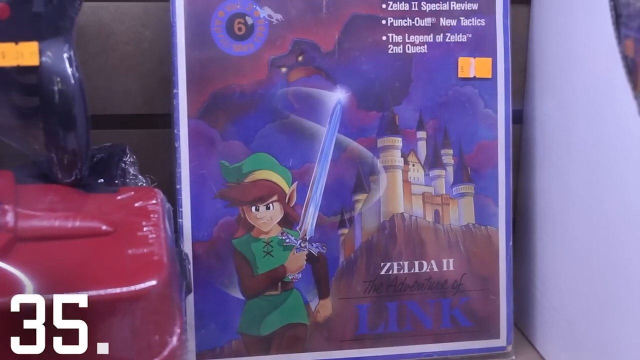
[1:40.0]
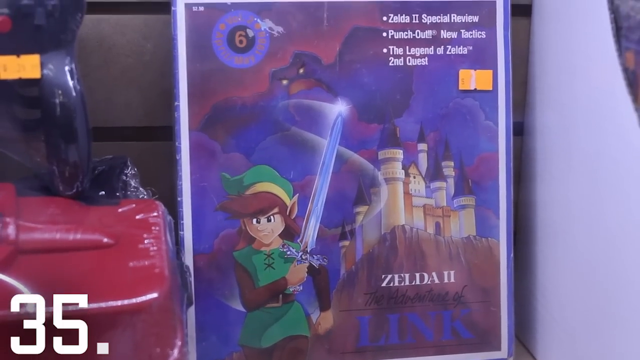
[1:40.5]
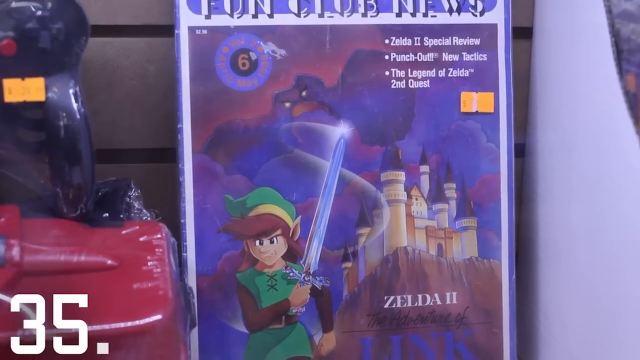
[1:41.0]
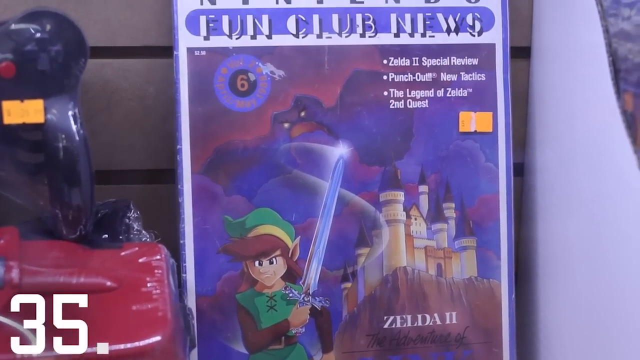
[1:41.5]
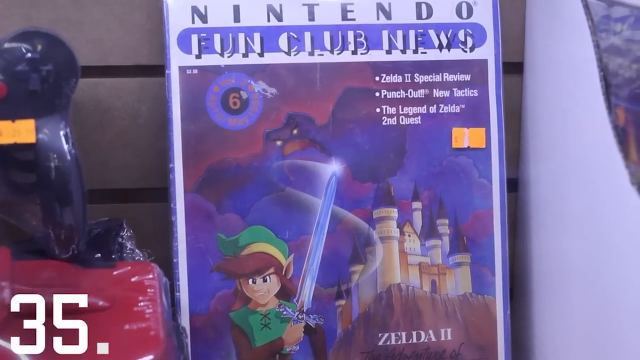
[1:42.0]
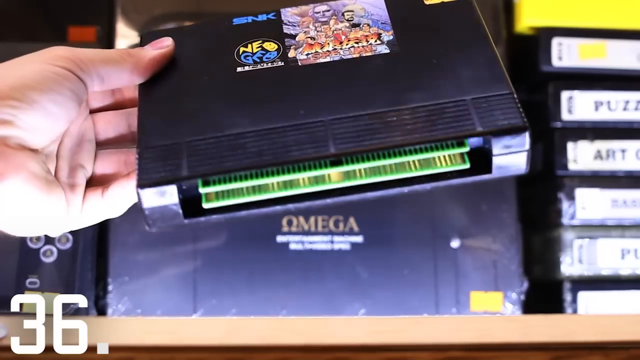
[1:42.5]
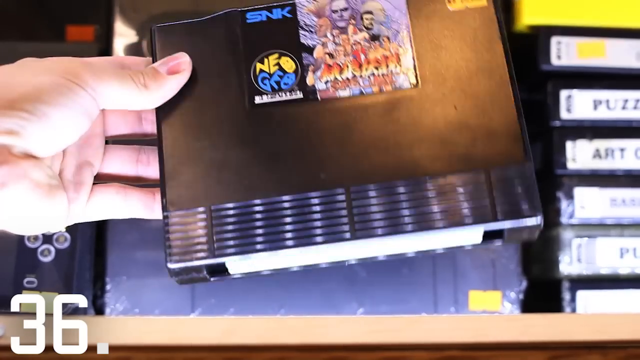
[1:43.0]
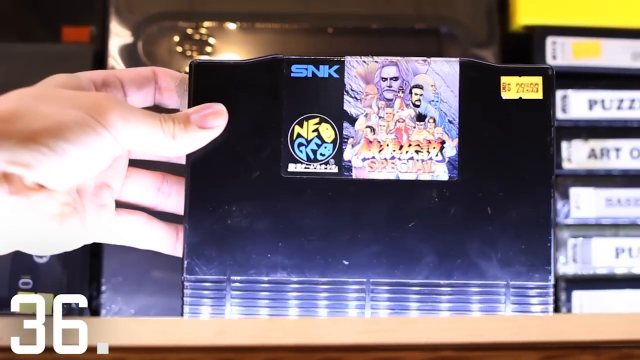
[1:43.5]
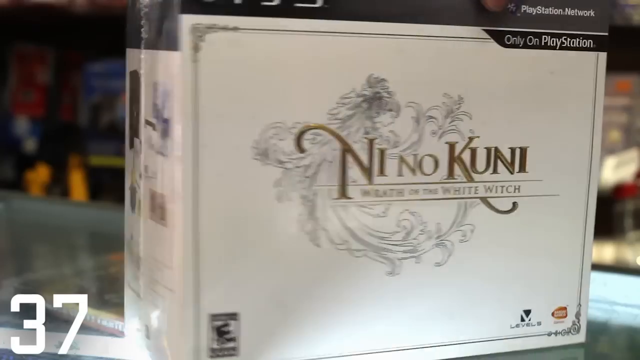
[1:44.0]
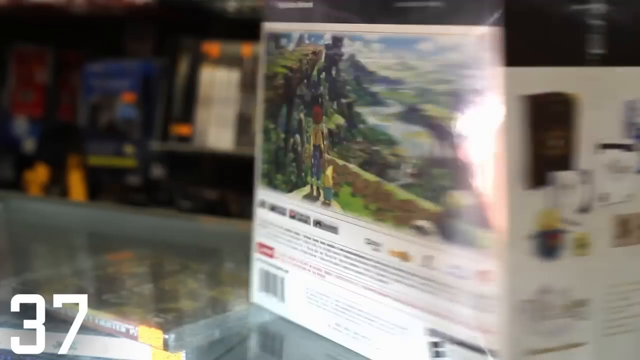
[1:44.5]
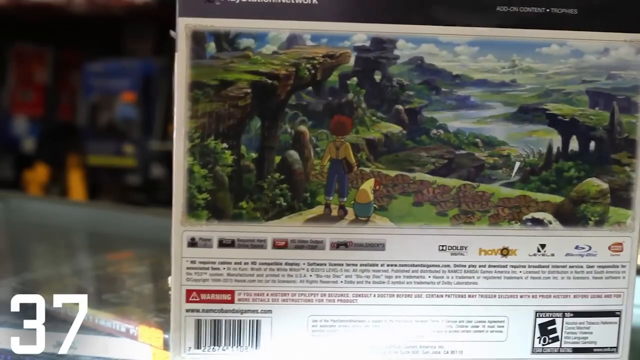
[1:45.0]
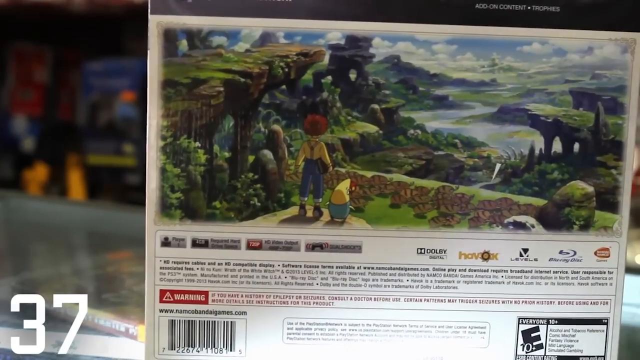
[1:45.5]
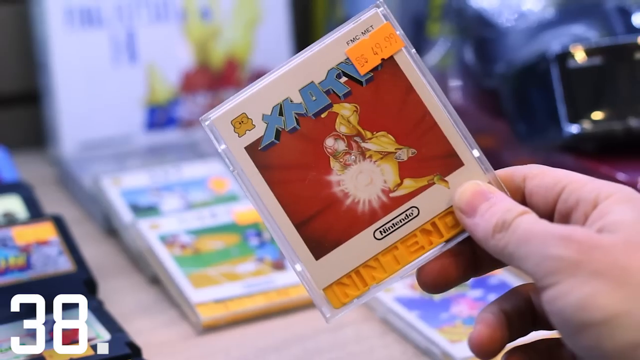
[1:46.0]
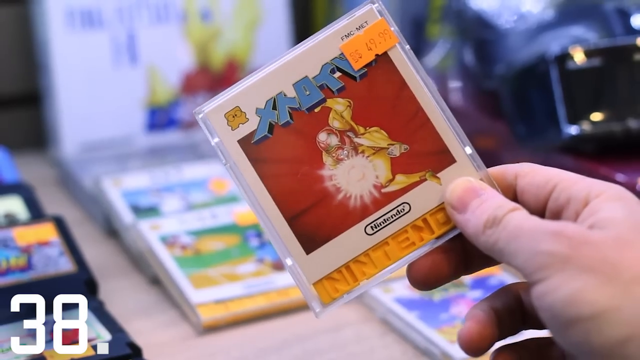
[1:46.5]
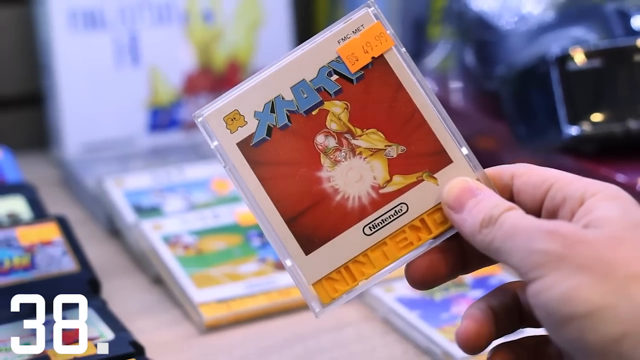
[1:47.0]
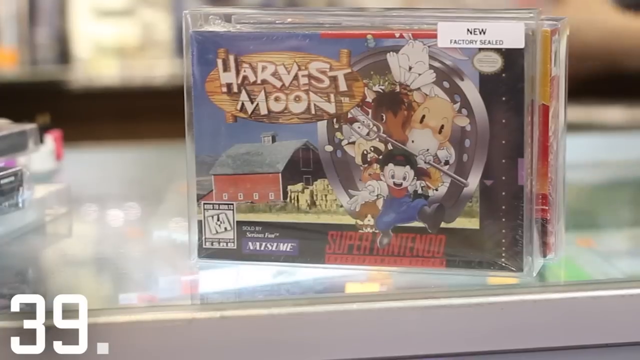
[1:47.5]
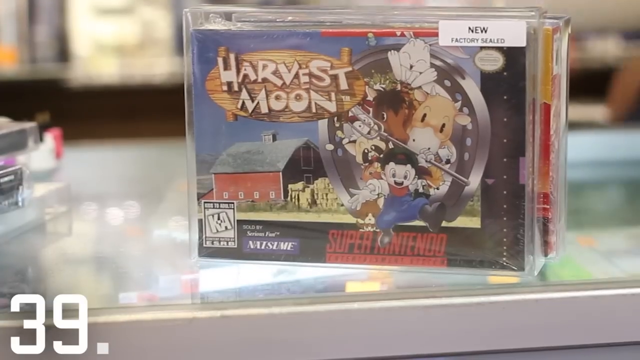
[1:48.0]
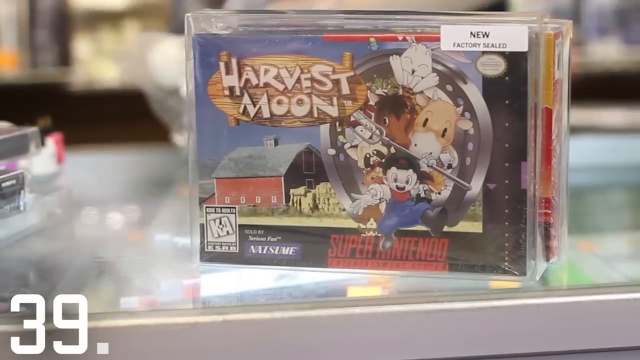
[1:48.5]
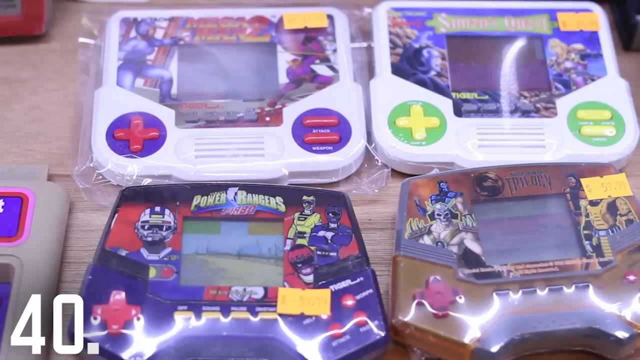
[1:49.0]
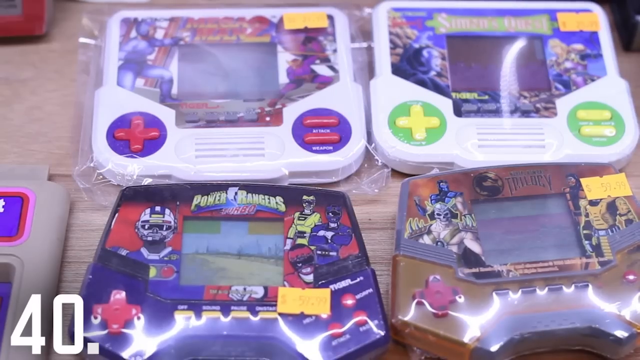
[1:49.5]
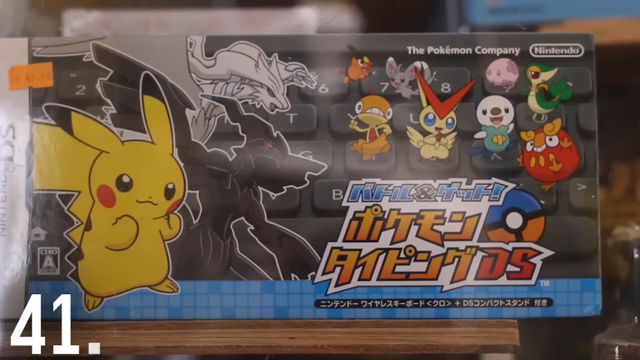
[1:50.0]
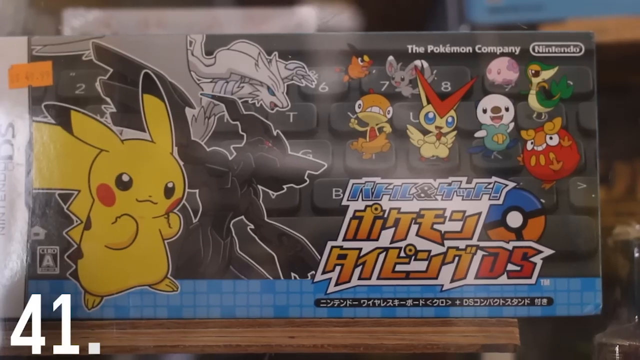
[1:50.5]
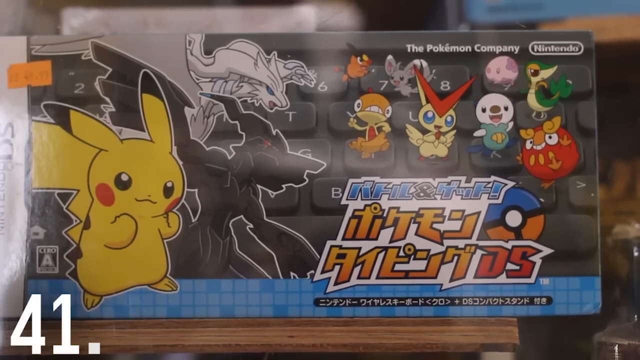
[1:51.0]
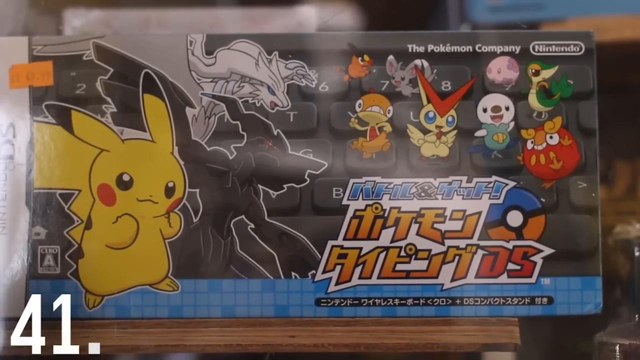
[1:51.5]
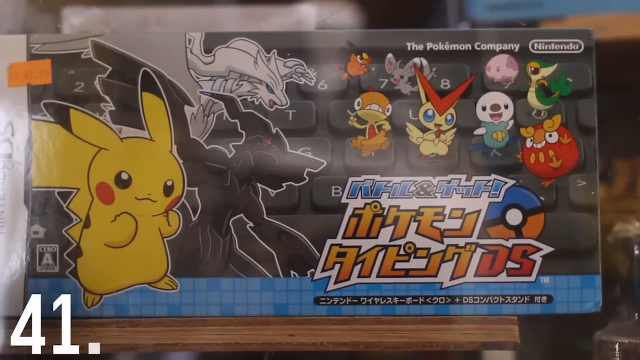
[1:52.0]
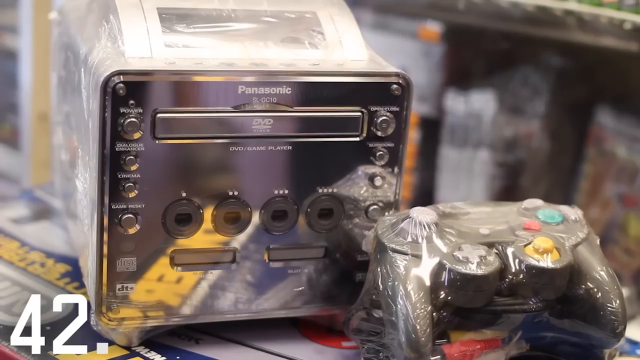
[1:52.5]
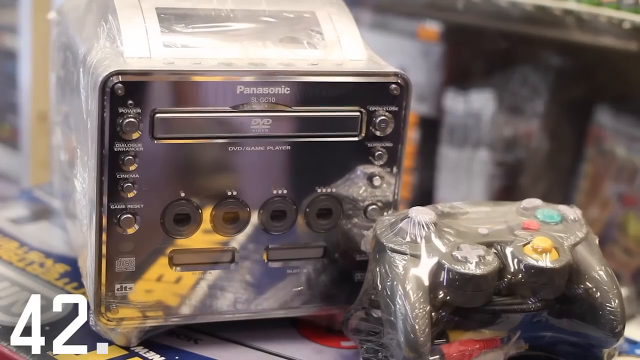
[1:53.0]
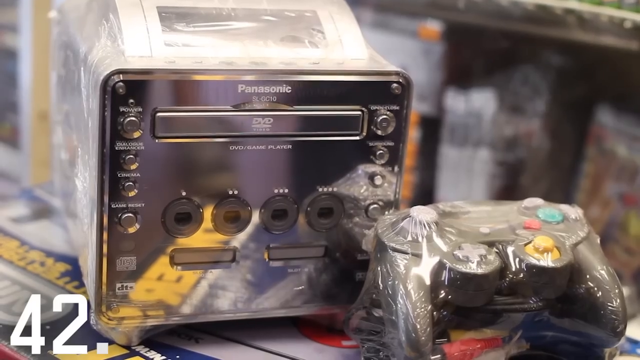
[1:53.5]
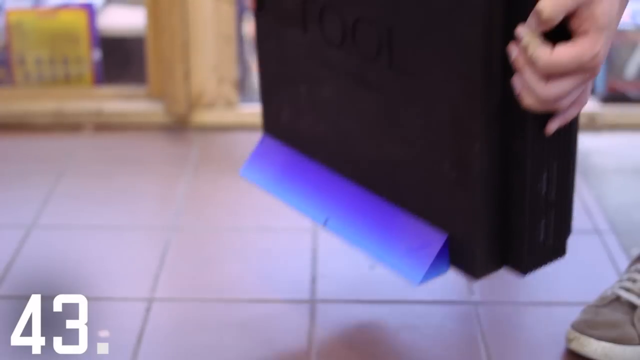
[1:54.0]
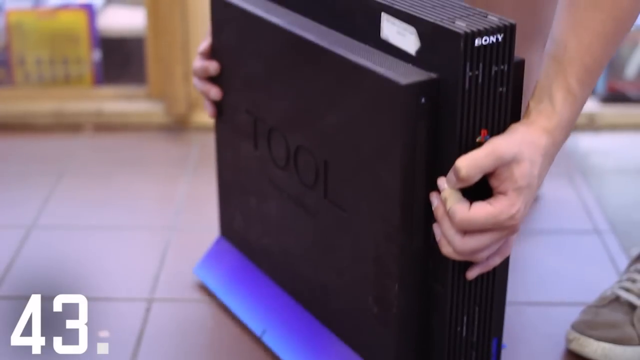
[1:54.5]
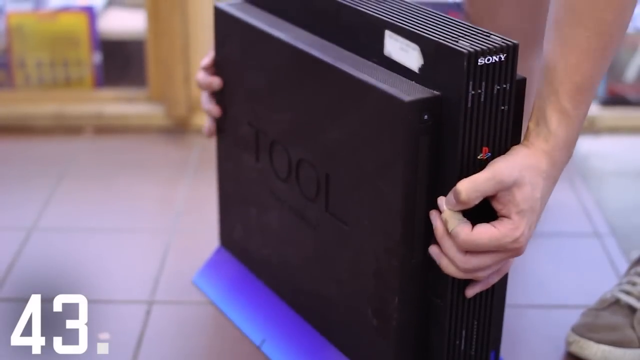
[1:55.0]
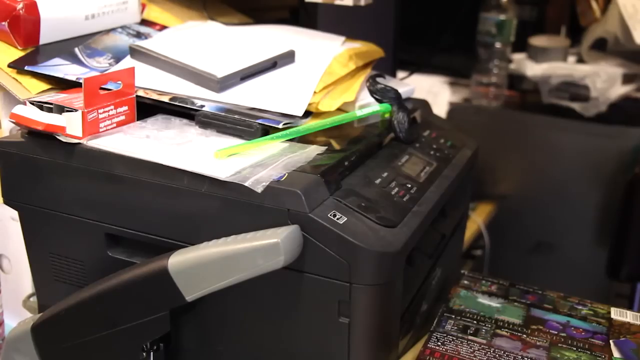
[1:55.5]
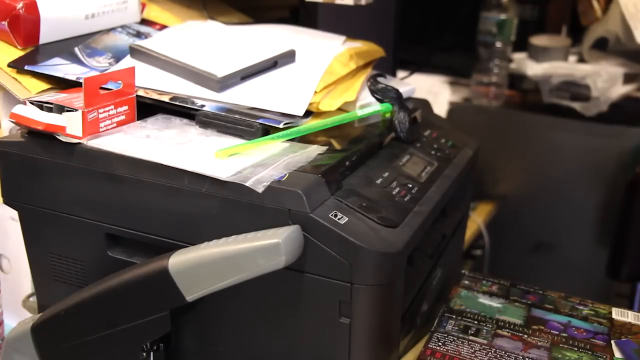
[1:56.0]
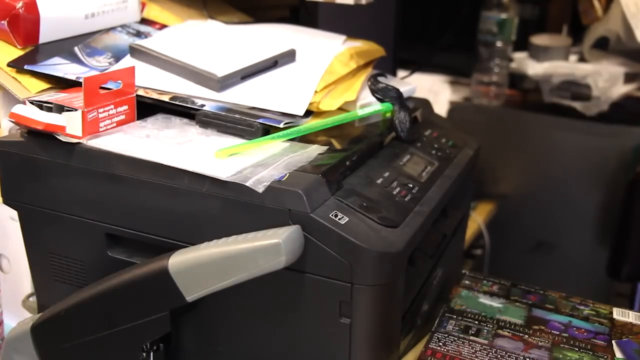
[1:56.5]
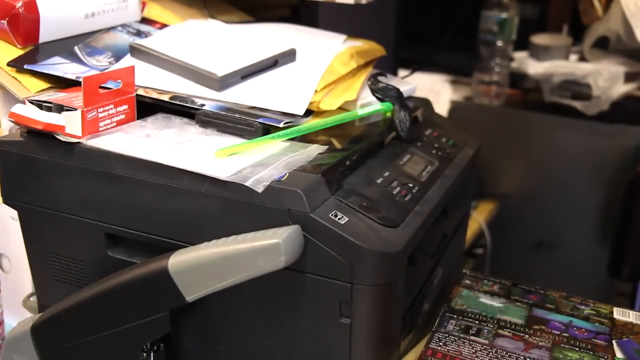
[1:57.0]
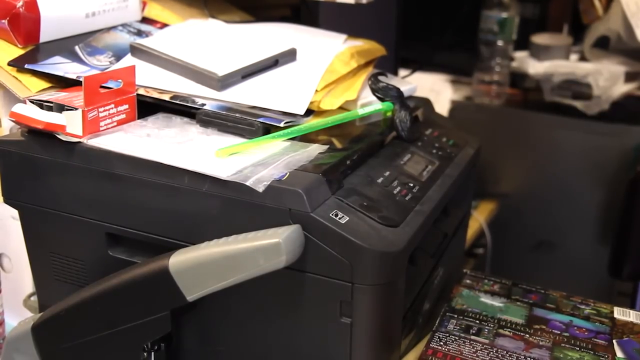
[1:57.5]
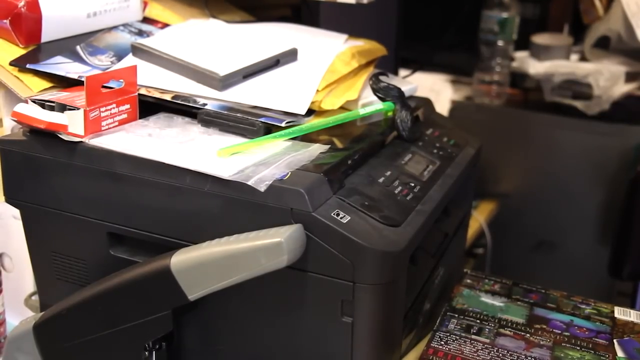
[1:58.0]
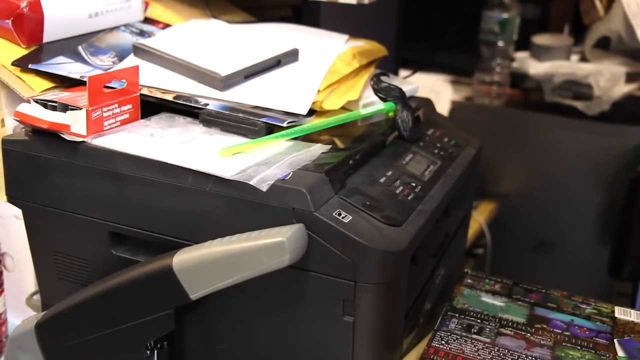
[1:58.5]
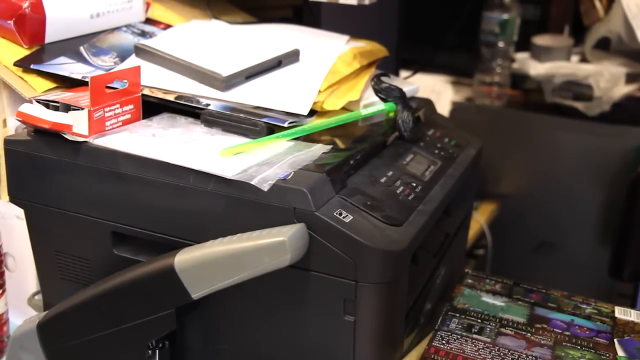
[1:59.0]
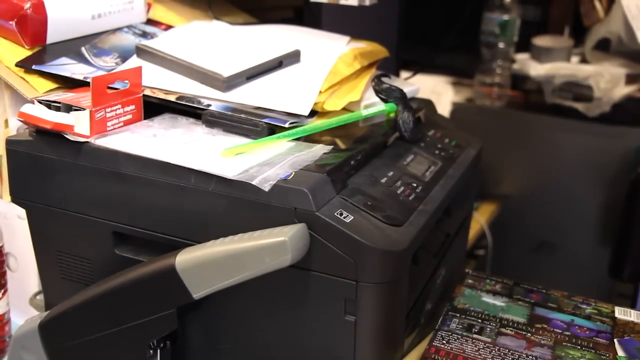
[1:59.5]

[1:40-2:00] What looks like a magazine shows Zelda II, The Adventure of Link, with a cartoonish character meant to be Link. The magazine reads "Zelda II Special Review," "Punch Out! New Tactics" and "Legend of Zelda Second Quest," and it is wrapped in cellophane. The person shows some type of SNK Neo Geo product. A big box says "only on PlayStation" at the top right, with a title that includes the words "white witch"; the box is flipped around to show a cartoonish anime-type scene. Something with Japanese writing and some kind of character follows, looking like some kind of cartridge for $49.99. A Harvest Moon Super Nintendo cartridge in its original box is shown in a display case, labeled "New Factory Sealed." Some handheld games appear: one says "Power Rangers," another "Mortal Kombat Trilogy," another "Mega Man 2," and another cannot be made out. The video switches to a box with a bunch of Pokémon characters and some Japanese writing, then some kind of machine that says "Panasonic DVD," which looks like it has controller ports and a whole bunch of other buttons. It then switches to a picture of a fax machine.